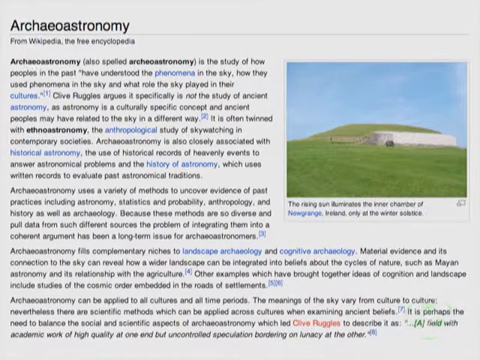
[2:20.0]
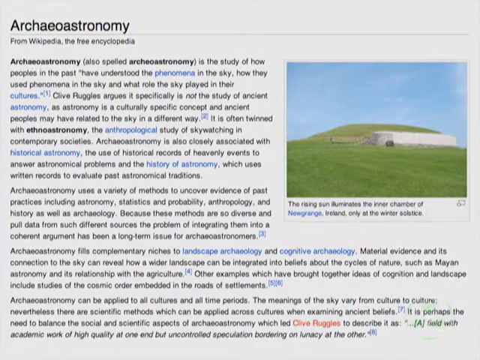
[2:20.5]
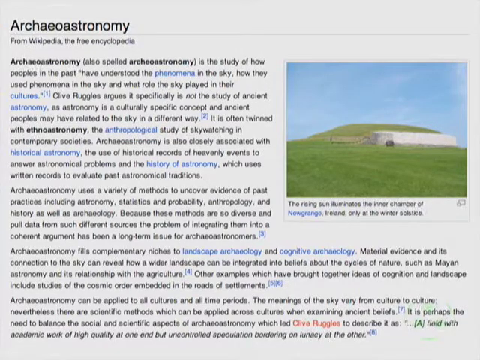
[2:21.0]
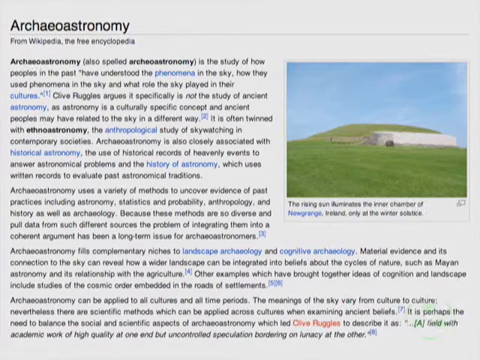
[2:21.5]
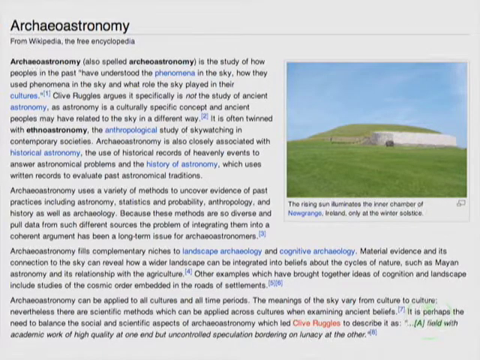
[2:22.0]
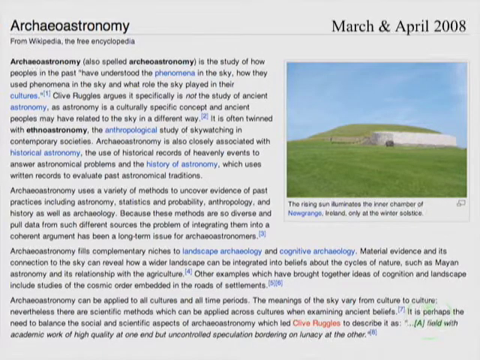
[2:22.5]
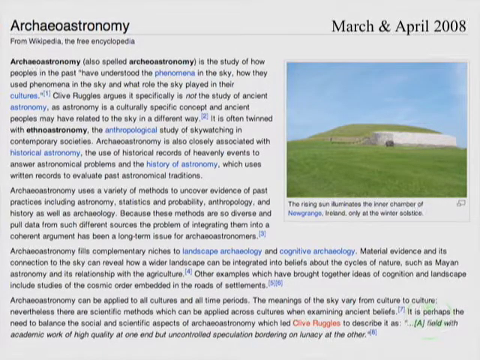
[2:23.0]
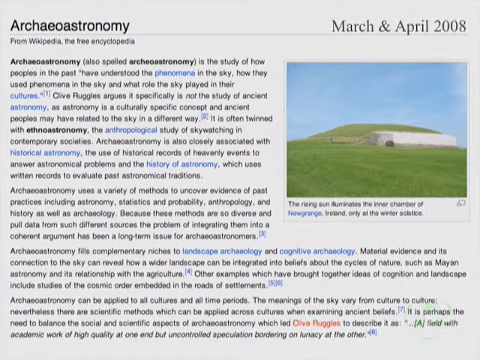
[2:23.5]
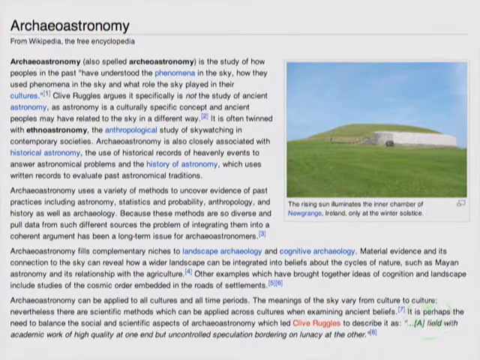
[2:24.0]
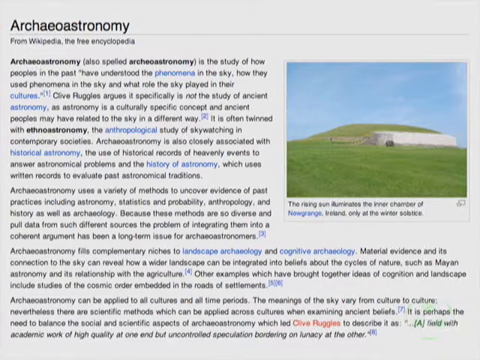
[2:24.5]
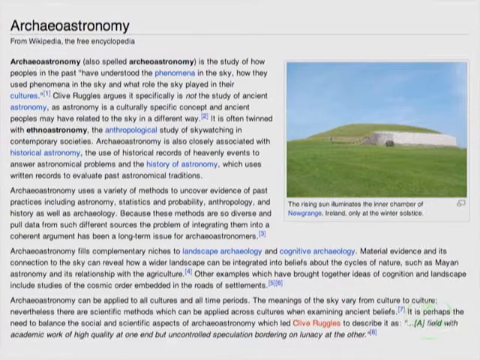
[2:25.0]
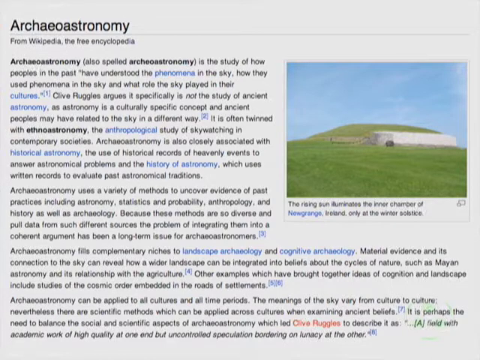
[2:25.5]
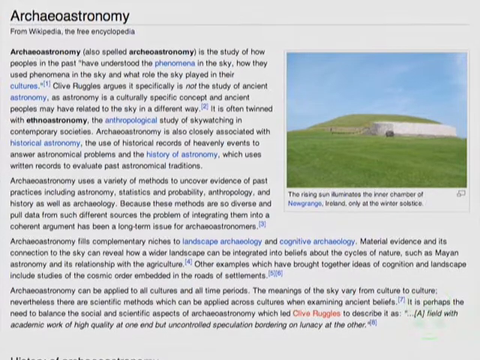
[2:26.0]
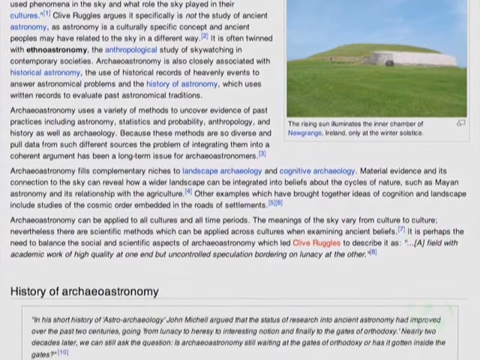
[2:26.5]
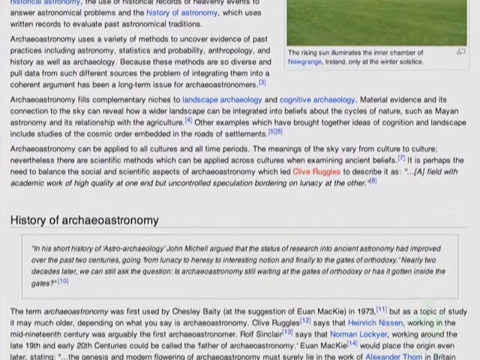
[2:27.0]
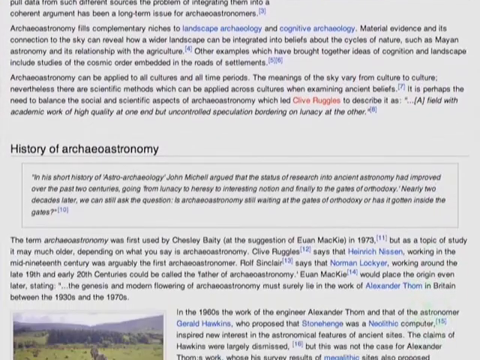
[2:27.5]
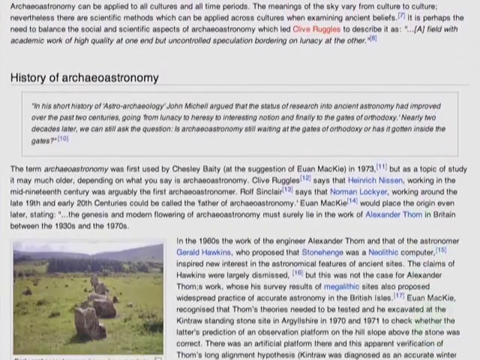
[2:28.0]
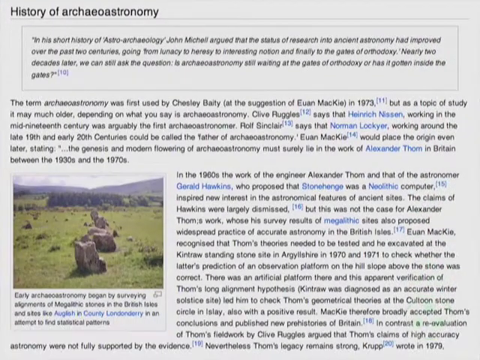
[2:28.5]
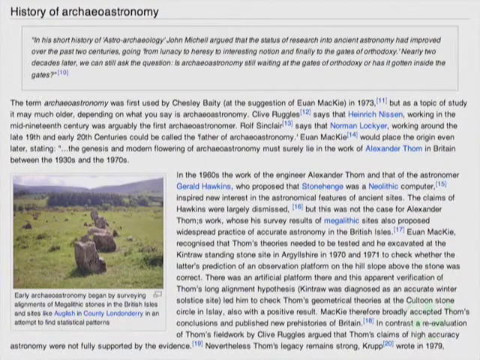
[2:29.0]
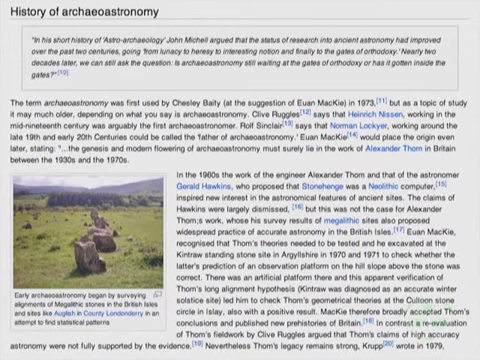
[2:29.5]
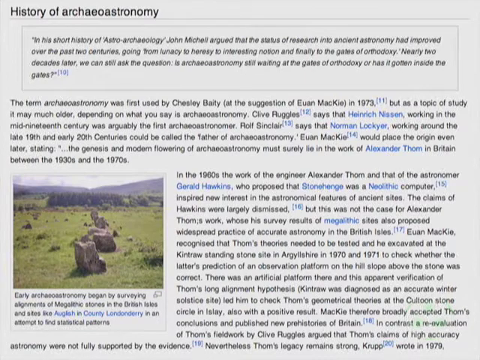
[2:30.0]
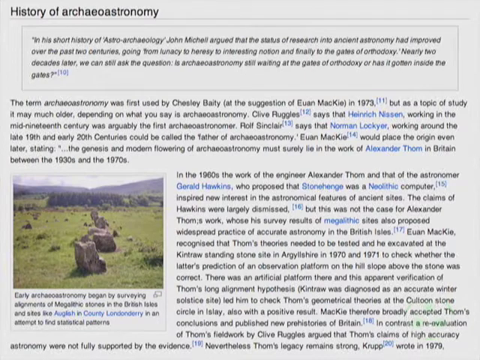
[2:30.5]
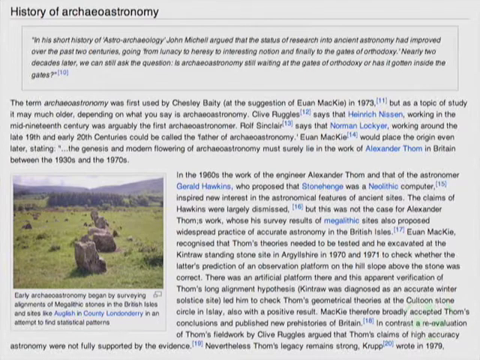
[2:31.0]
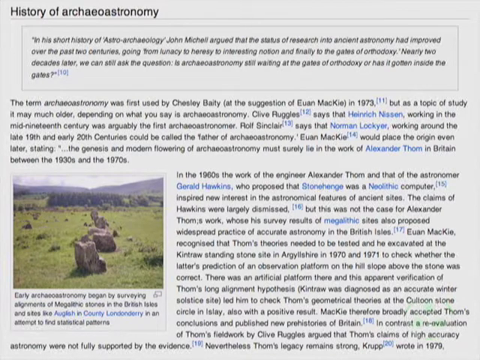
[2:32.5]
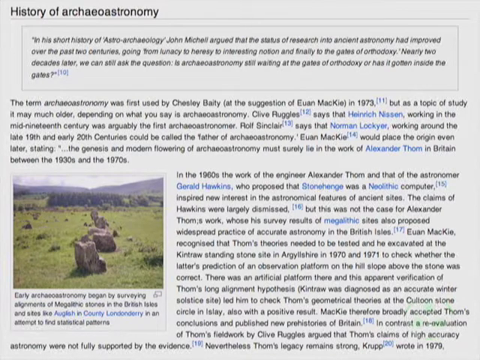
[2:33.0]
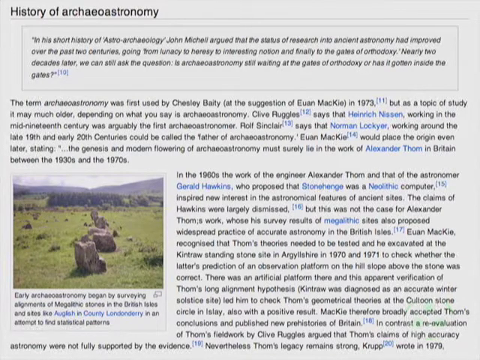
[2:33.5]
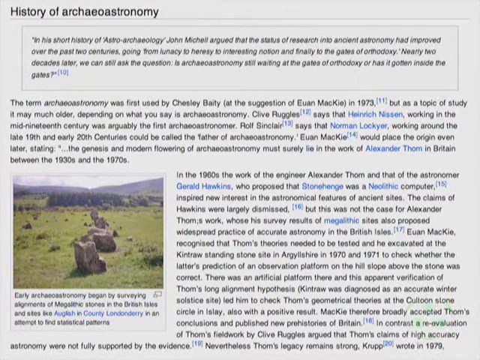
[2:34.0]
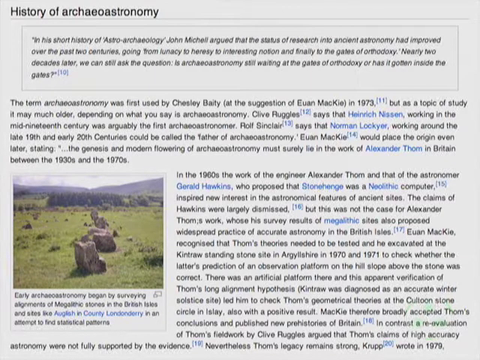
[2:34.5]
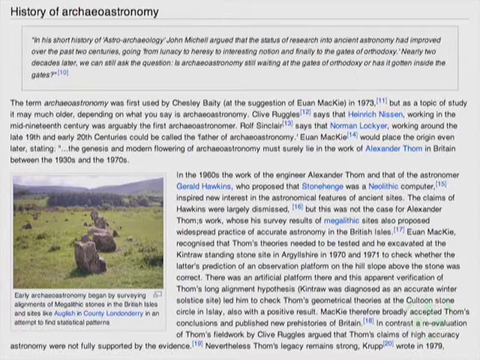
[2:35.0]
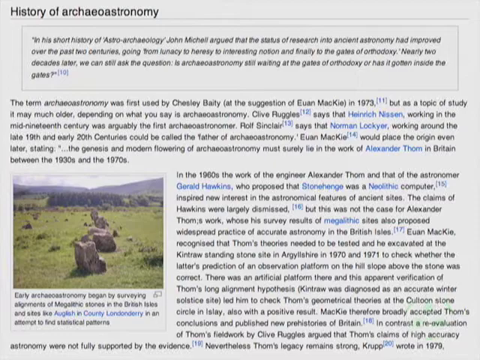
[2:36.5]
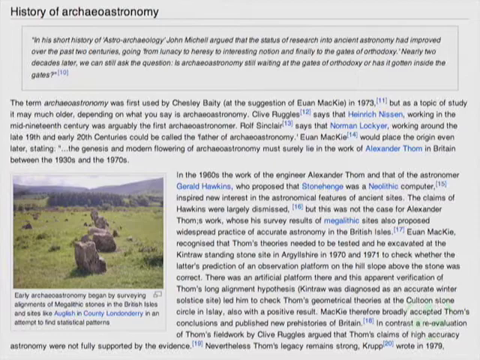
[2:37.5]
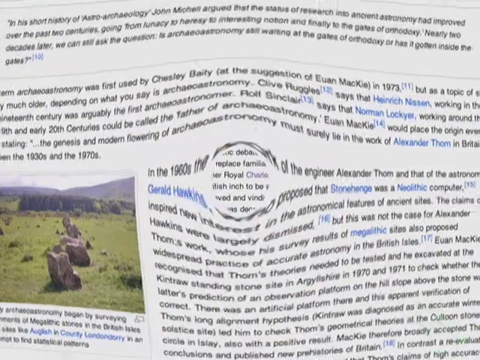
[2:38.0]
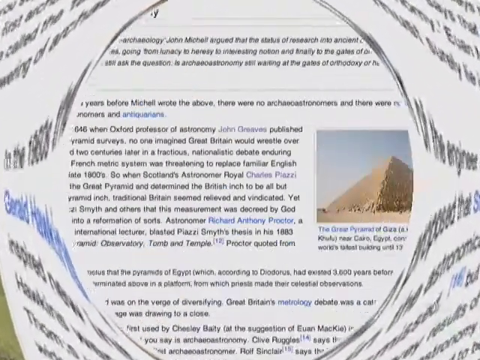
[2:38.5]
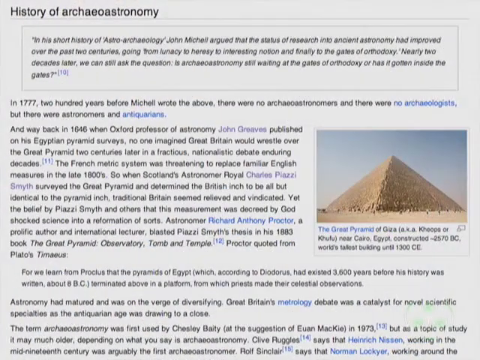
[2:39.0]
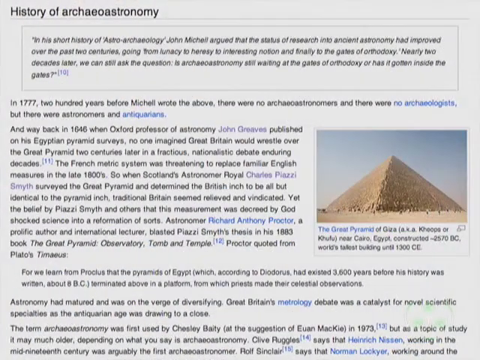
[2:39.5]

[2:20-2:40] A page with the heading "archaeoastronomy" is shown, looking much like a Wikipedia page. Photos appear in the left and right sections of the screen, with text filling the rest of the page, and the images have text beneath them.